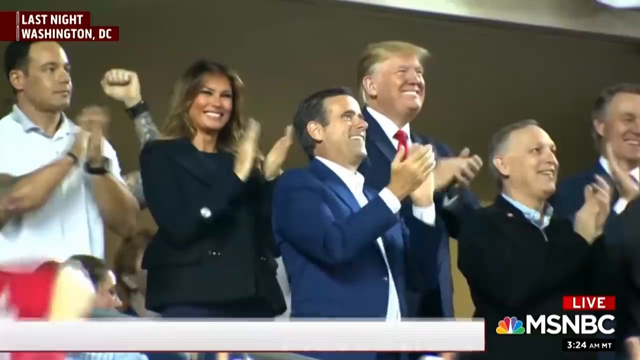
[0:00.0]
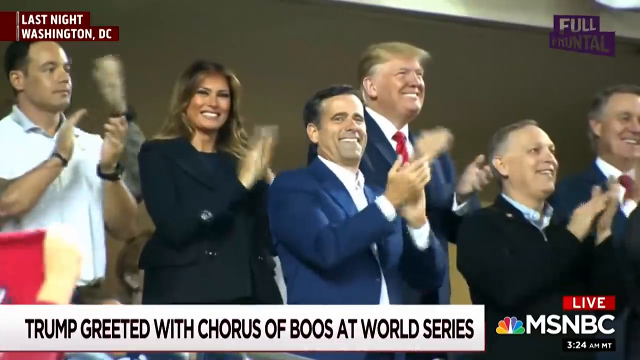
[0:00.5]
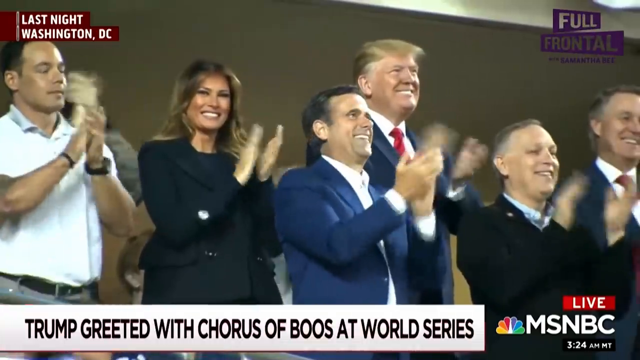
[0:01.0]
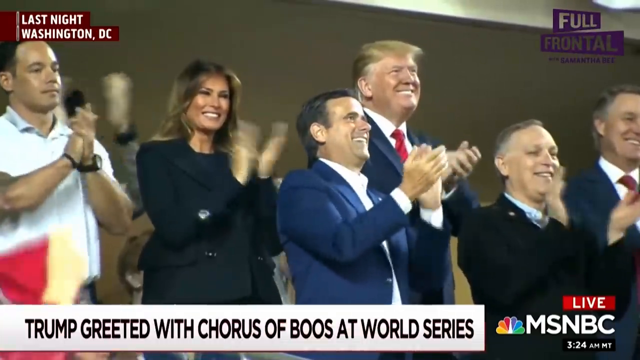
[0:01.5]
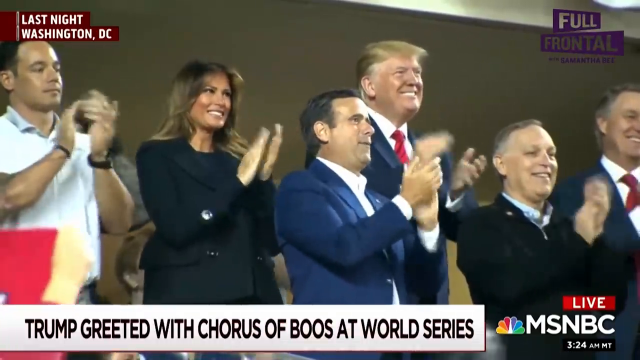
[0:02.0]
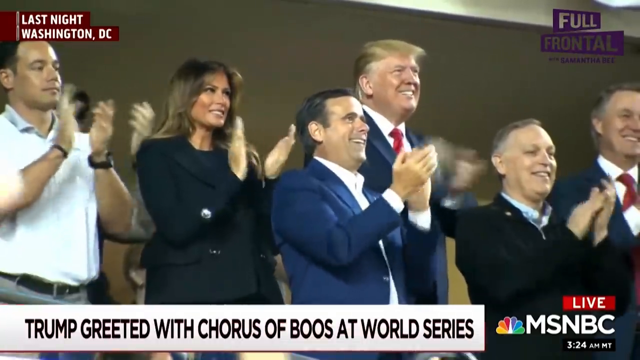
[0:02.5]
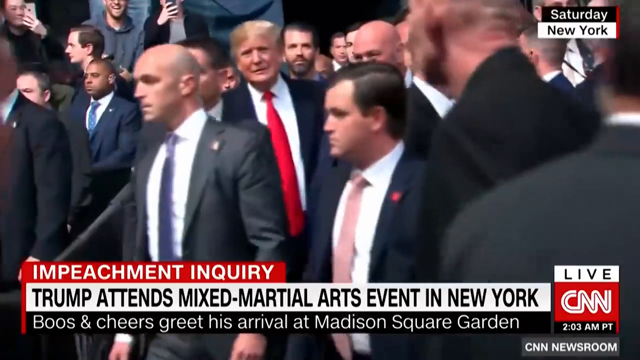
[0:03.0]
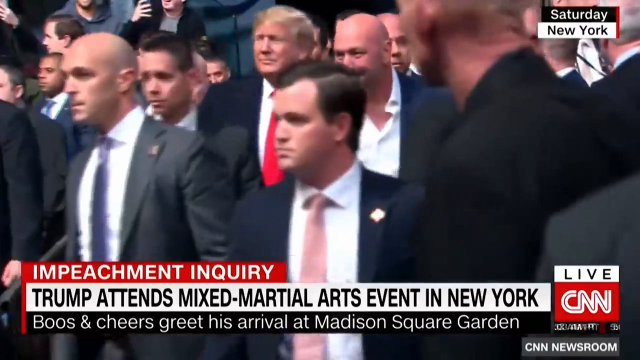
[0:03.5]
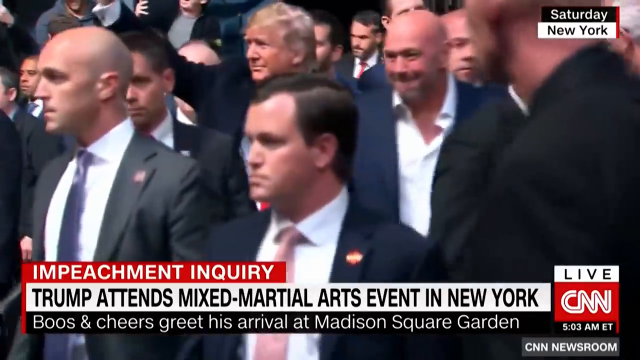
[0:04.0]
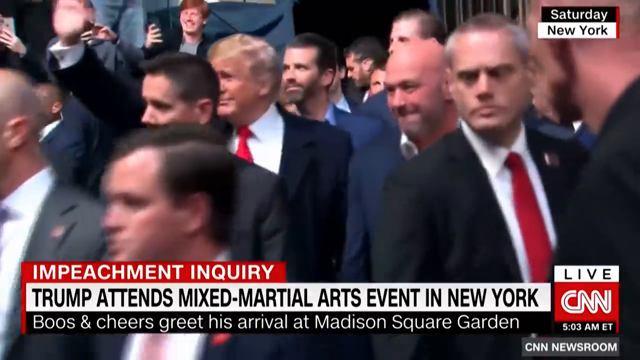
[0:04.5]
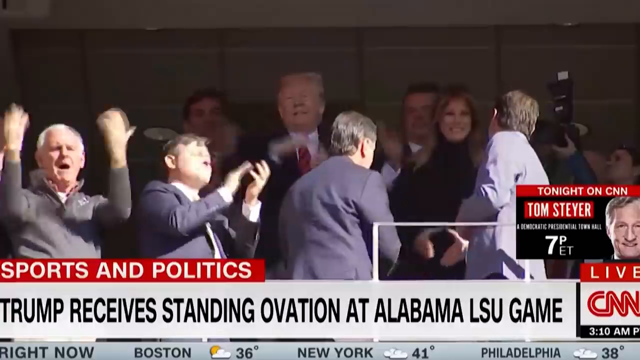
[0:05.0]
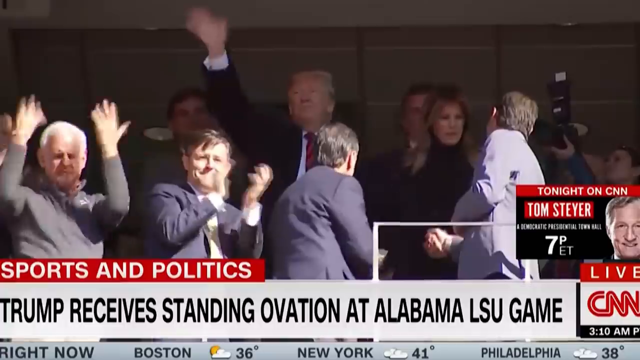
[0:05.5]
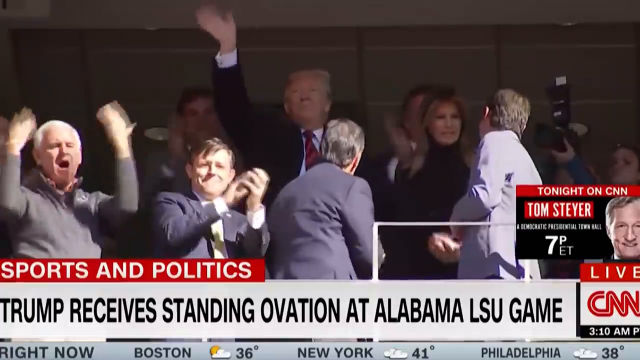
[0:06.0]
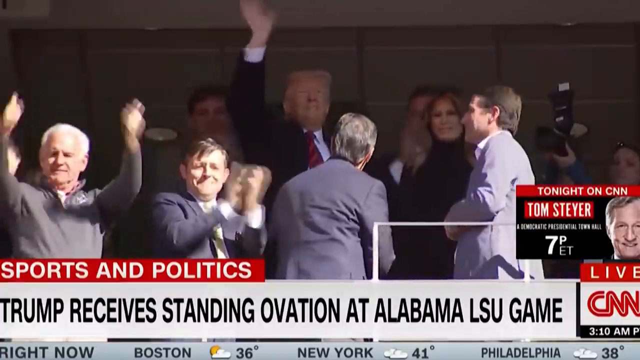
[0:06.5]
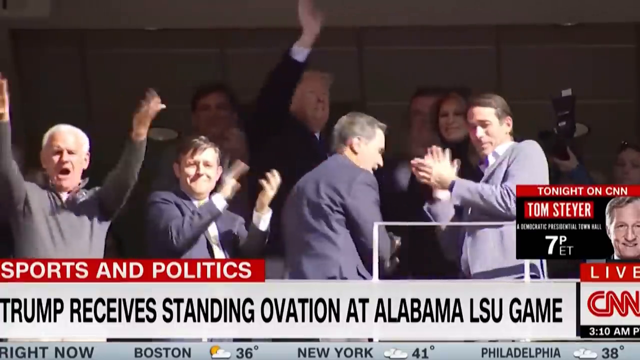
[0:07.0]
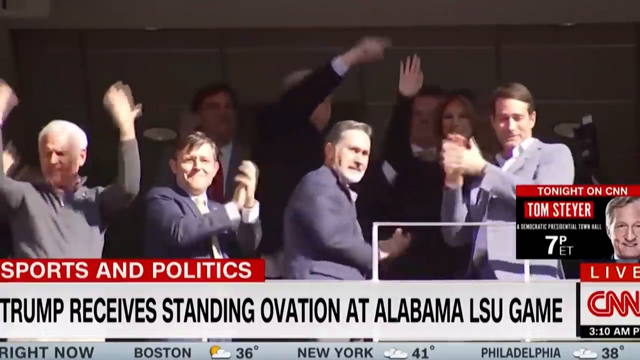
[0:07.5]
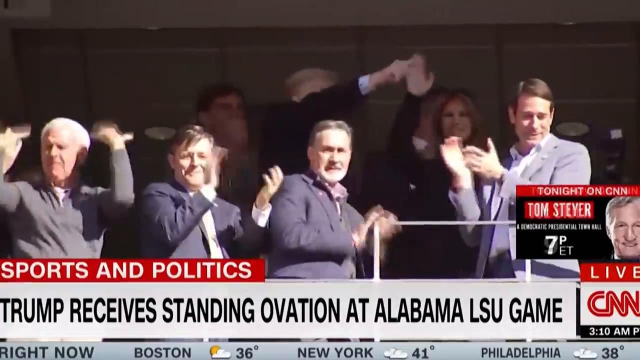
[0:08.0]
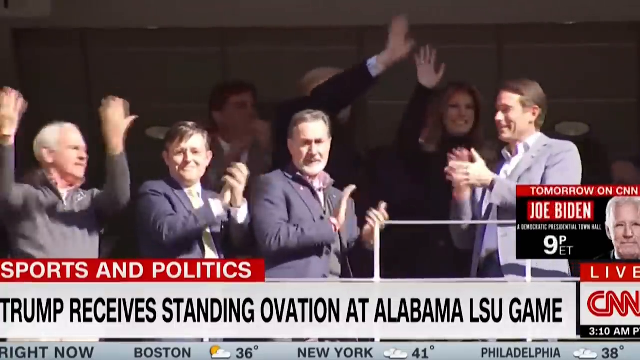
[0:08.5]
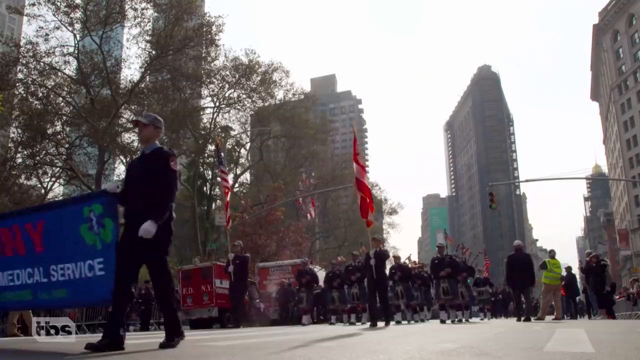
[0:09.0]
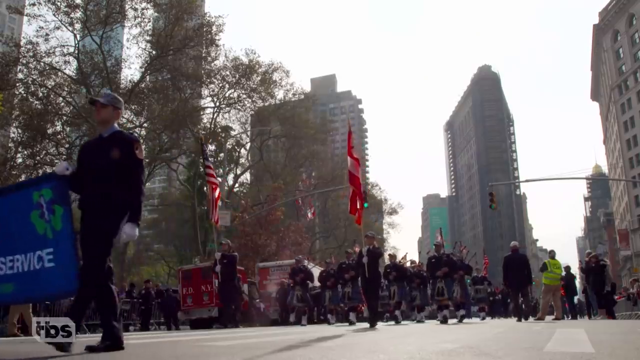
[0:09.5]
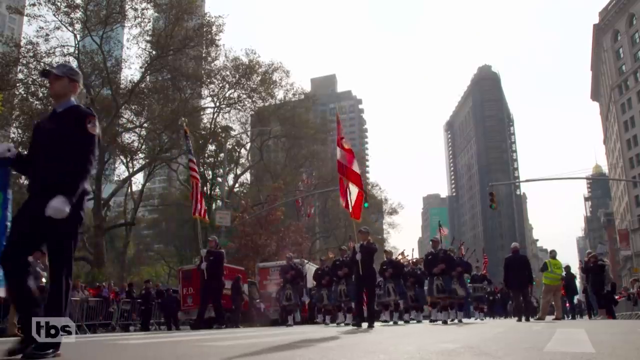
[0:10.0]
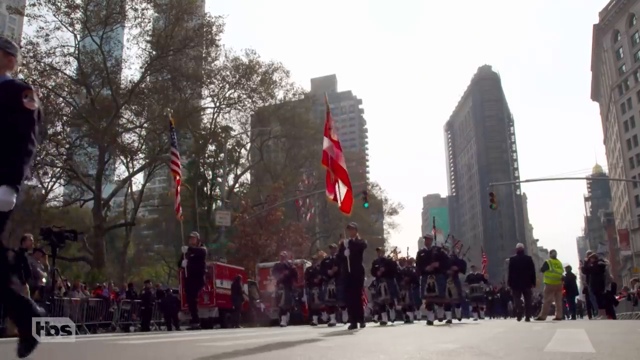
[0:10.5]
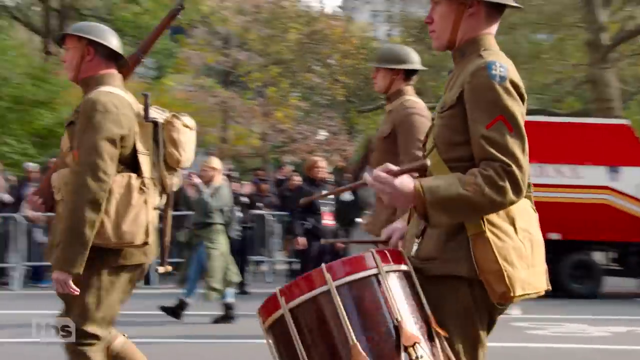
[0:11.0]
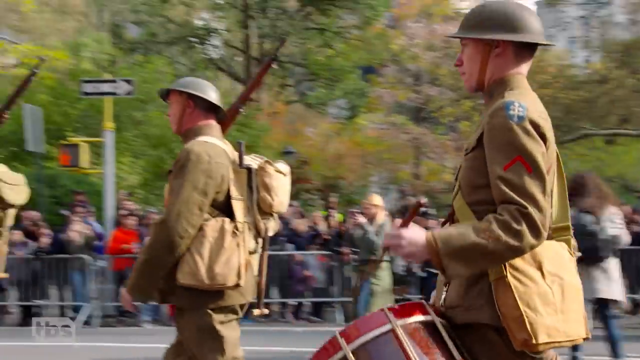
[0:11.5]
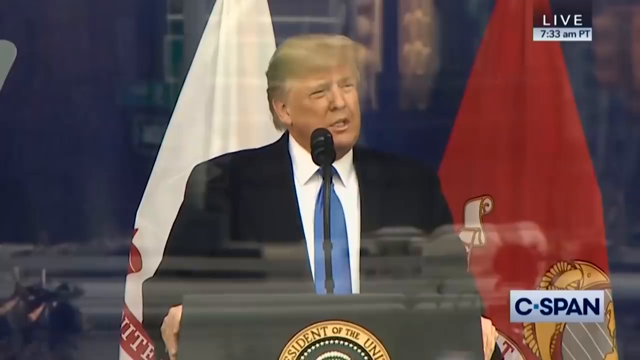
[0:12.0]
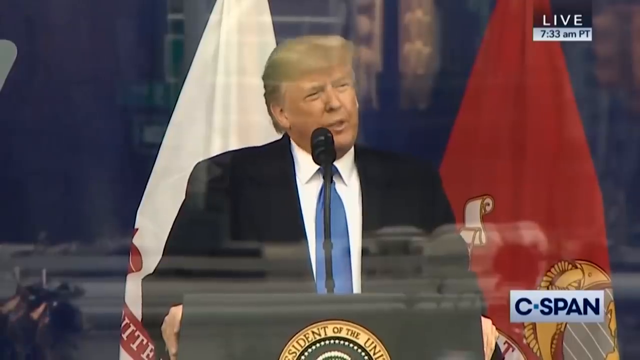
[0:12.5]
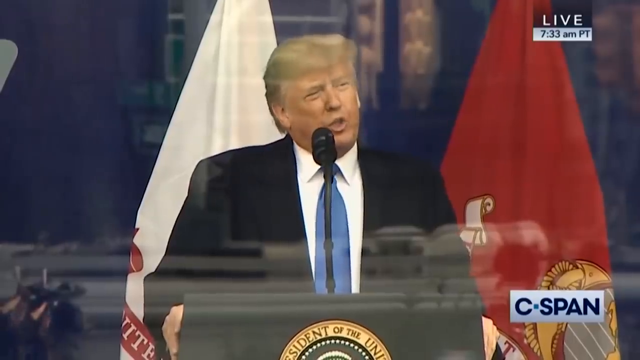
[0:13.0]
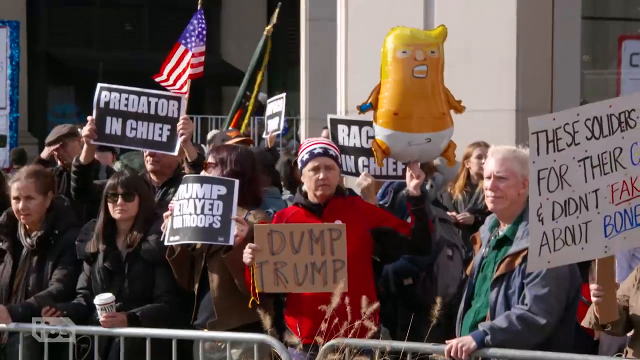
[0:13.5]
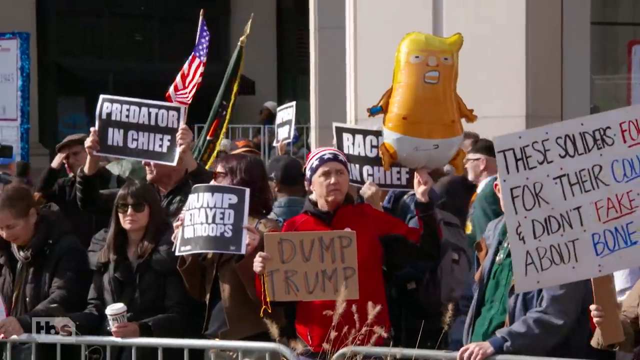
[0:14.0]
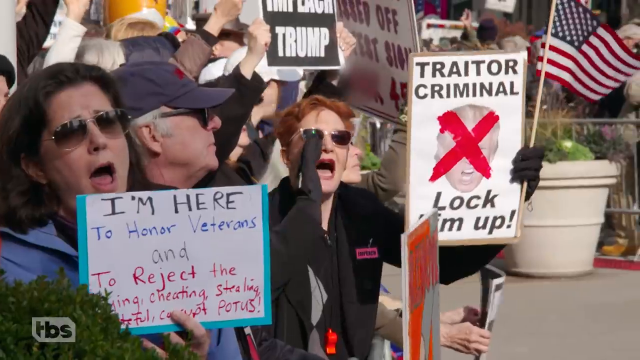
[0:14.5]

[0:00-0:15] The video is a news story about Donald Trump. It opens with MSNBC live coverage, with a heading at the bottom that reads "Trump greeted with chorus of boos at World Series," while the footage shows Donald Trump with others clapping, apparently at the World Series. It then switches to CNN footage with text reading "impeachment inquiry. Trump attends mixed martial arts event in New York. Boos and cheers greet his arrival at Madison Square Garden." The next segment reads "Trump receives standing ovation at Alabama LSU game" and shows Trump with people, and people clapping. Next comes part of a parade that looks like a veterans parade, and then the video switches to Trump behind a podium on a stage. The segments move very fast. The title at the top of the video reads "will Trump get booed."